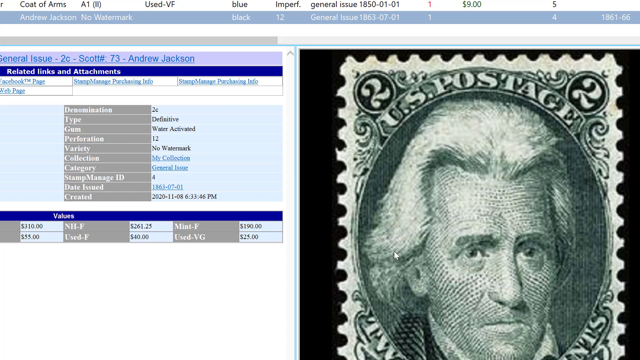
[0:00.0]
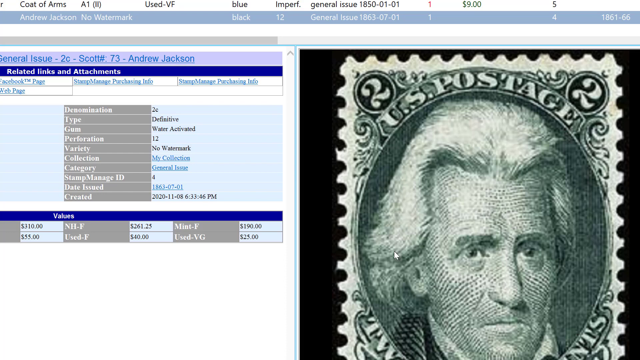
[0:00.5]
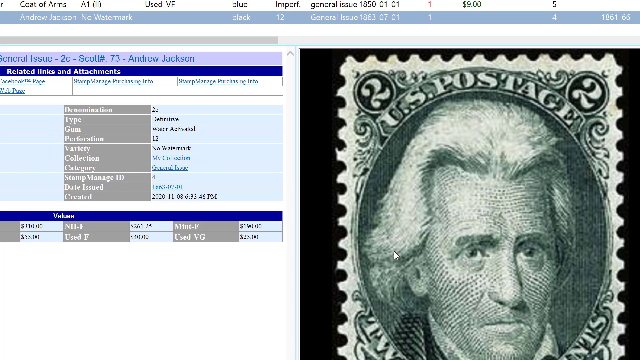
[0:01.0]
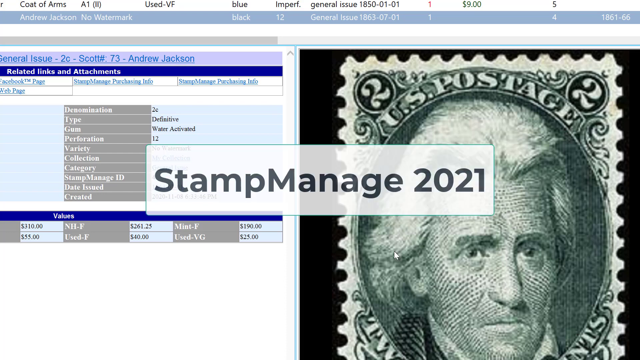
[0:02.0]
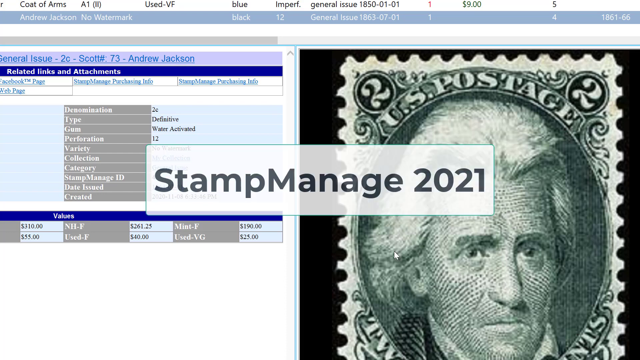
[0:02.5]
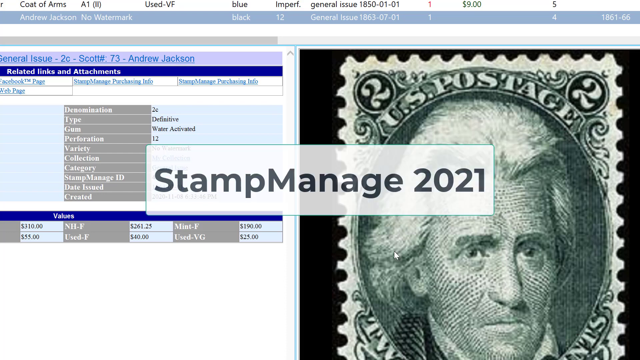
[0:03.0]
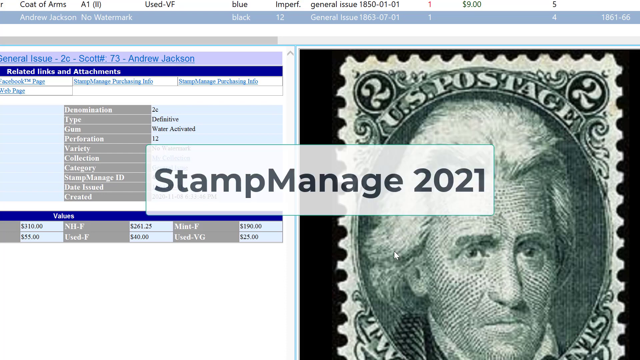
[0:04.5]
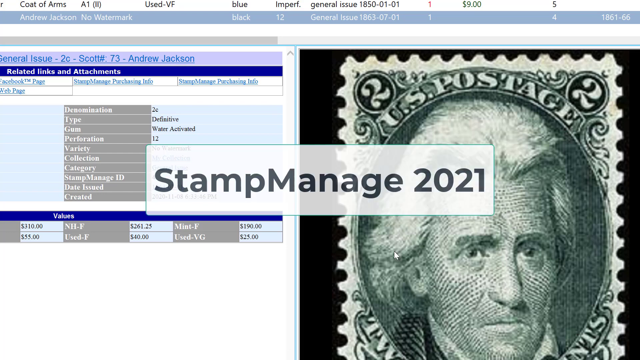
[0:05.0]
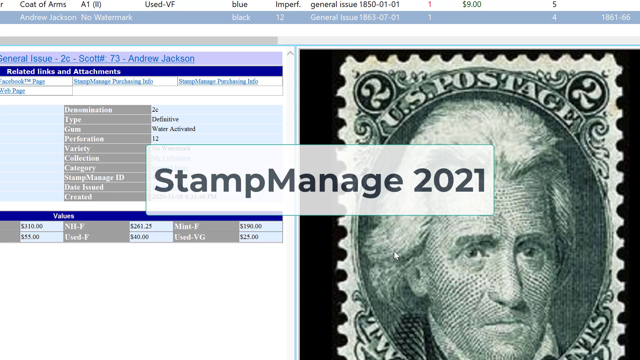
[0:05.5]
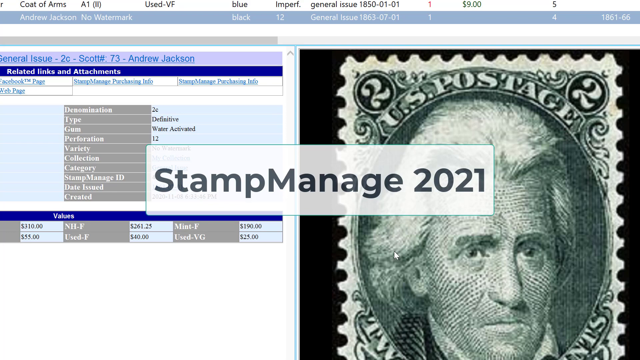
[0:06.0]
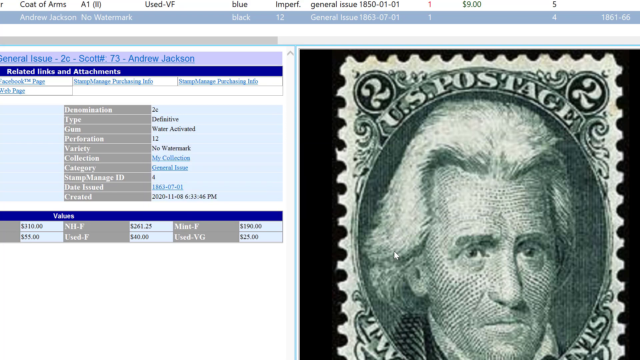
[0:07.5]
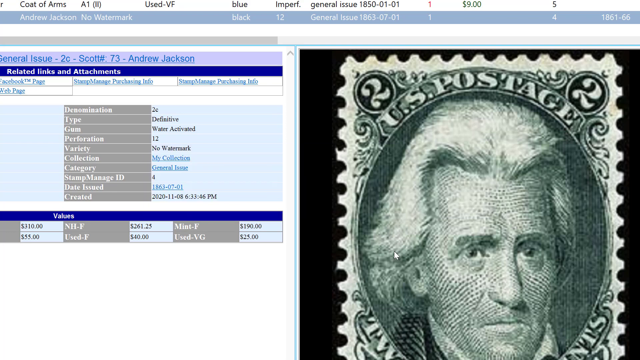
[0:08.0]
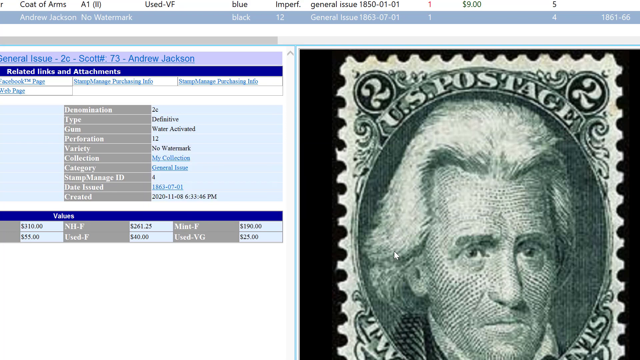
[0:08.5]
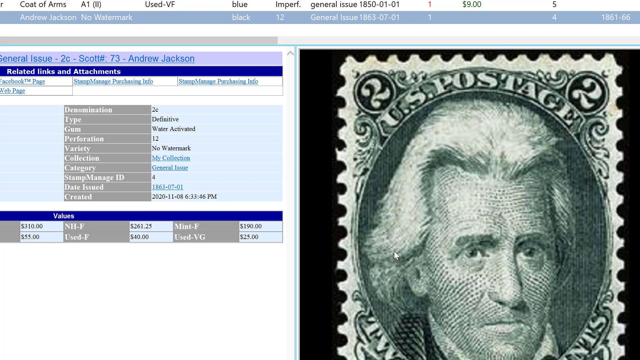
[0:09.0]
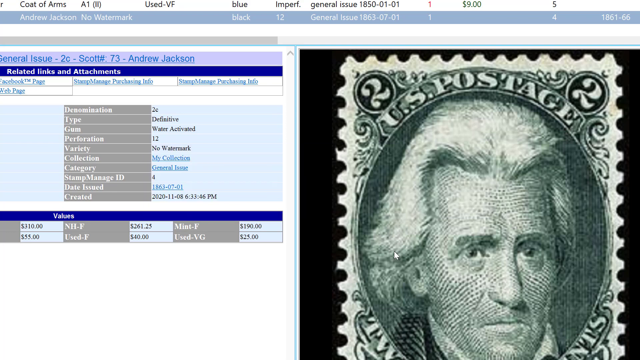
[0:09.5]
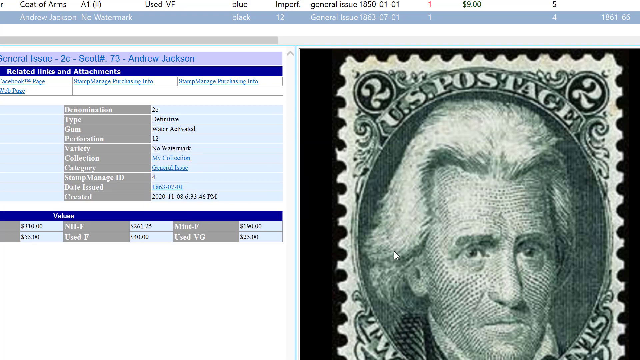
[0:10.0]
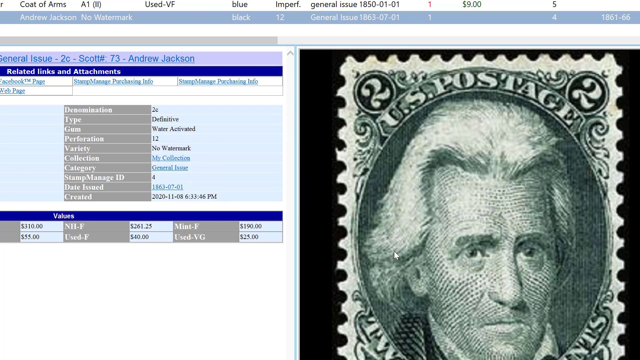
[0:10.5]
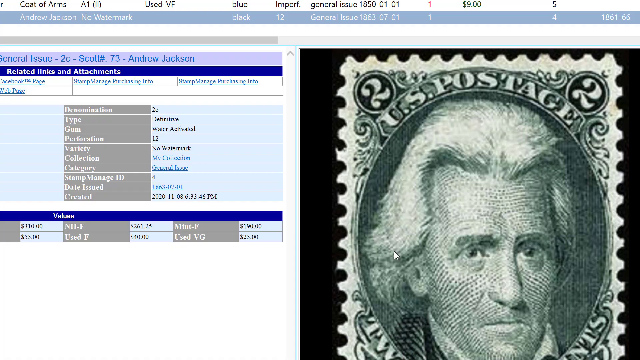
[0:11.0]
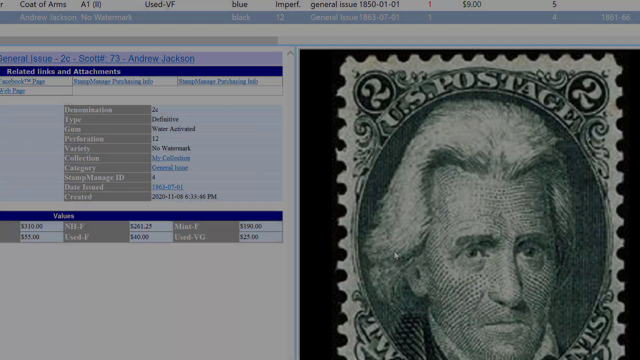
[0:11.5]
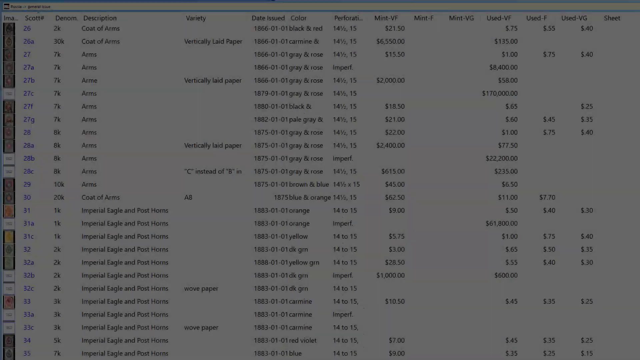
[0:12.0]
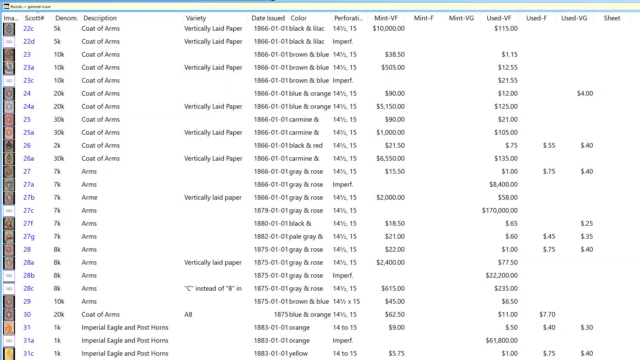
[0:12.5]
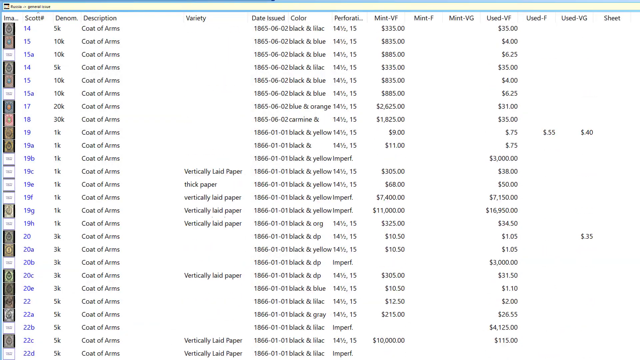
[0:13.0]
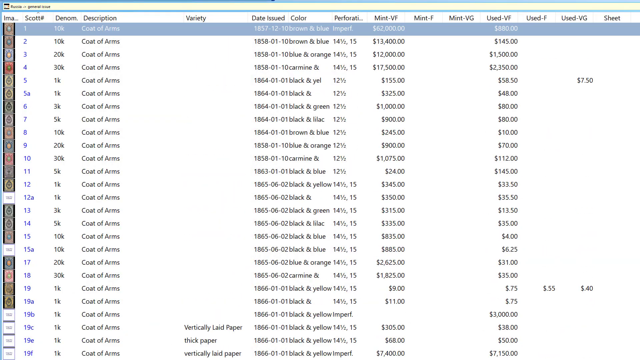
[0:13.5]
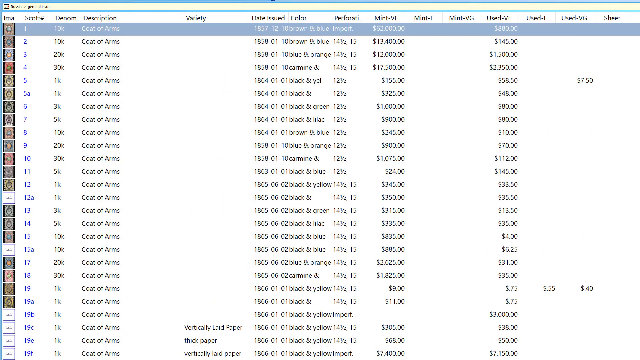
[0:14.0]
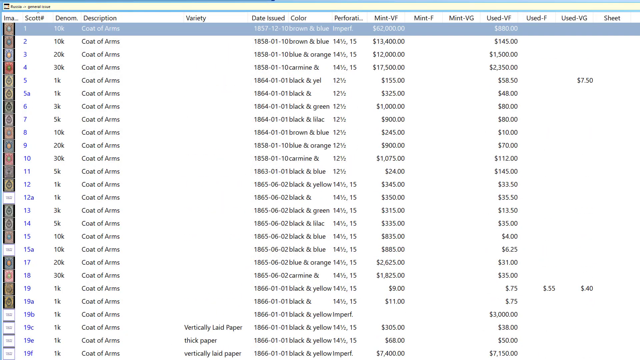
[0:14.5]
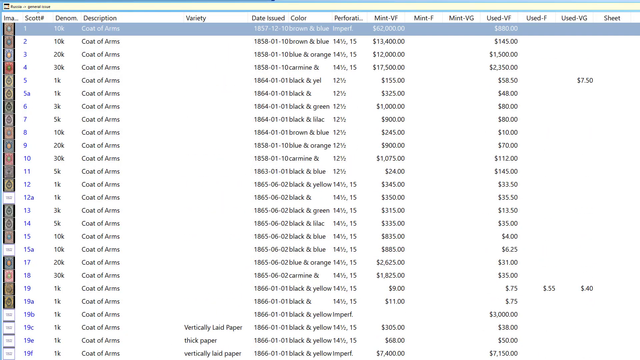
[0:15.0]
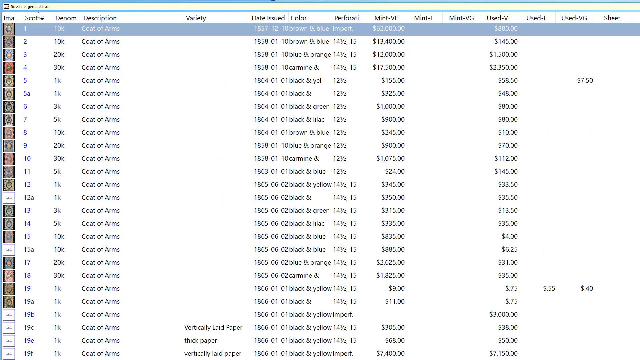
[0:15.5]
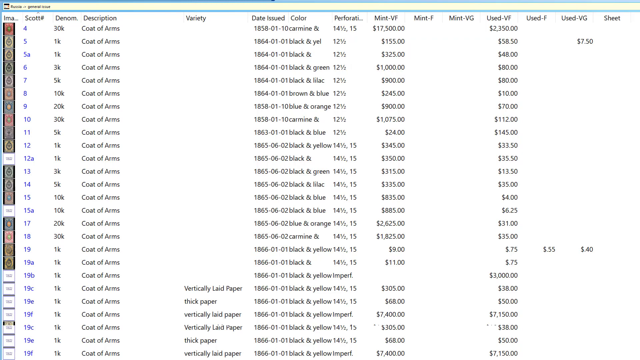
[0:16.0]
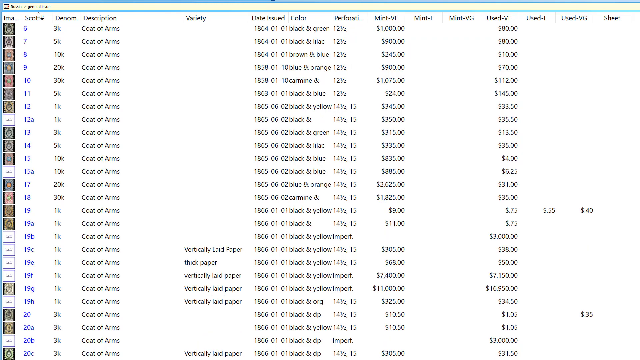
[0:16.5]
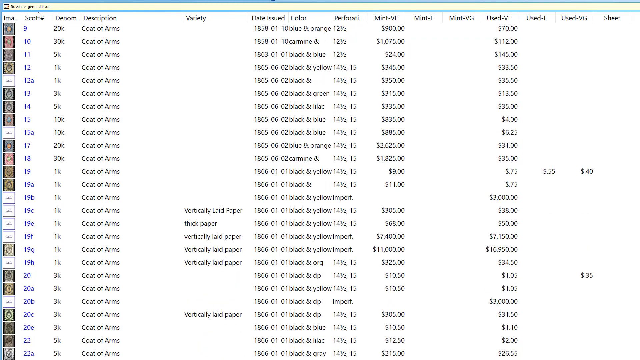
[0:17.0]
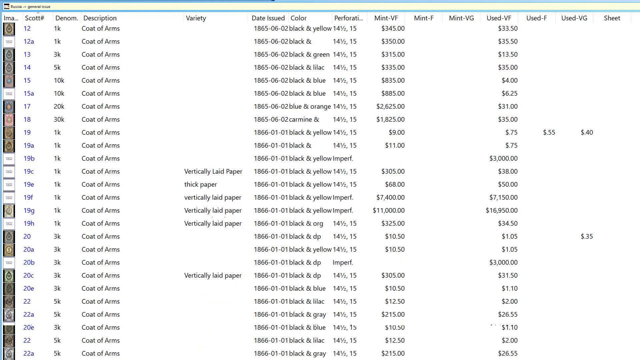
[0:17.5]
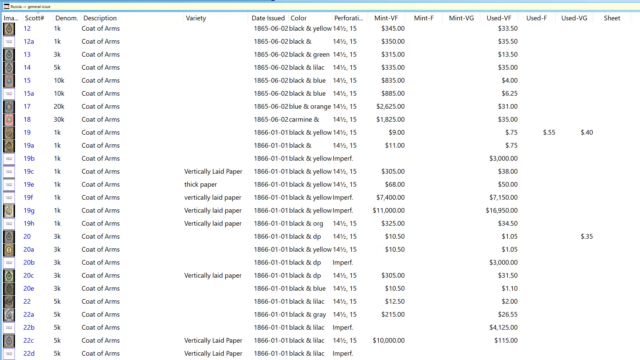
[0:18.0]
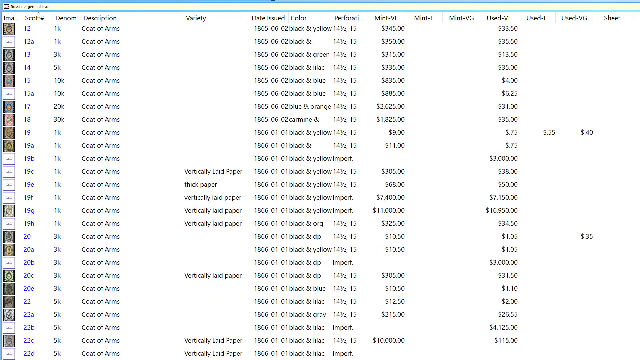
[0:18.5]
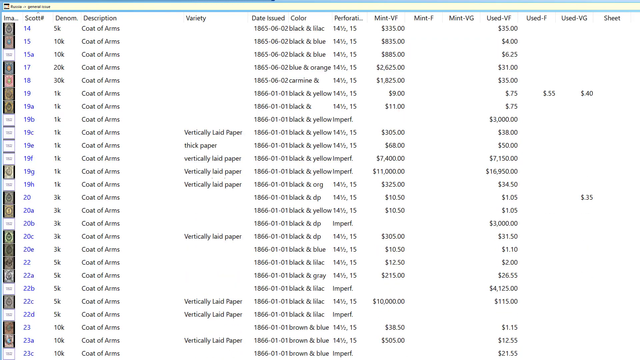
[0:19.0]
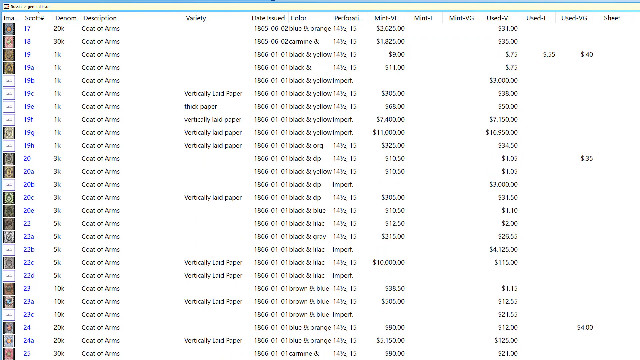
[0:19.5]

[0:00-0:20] A screen recording shows a computer screen with two windows side by side. The left window appears to hold a table of text with some links and attachments. At the top it reads "General Issue 2C, Scott, 7-3, Andrew Jackson", and below that "Related Links and Attachments", with the related links hyperlinked beneath it. There is also a gray table of text with various values and text. On the right side of the screen is a US postage stamp that appears to bear a portrait of Andrew Jackson. A white transparent box appears in the middle with black text reading "Stamp Manage 2021". A new window then appears in which someone scrolls through a list of many different stamps, with an icon for each stamp on the left.